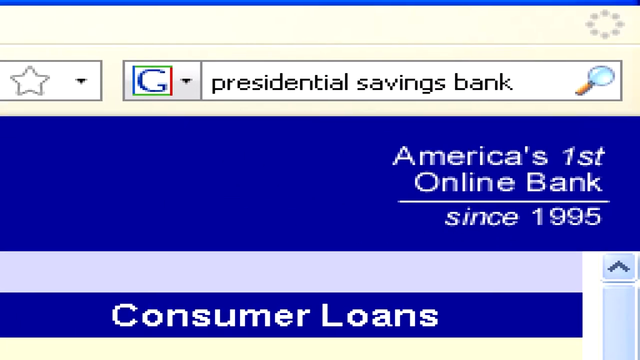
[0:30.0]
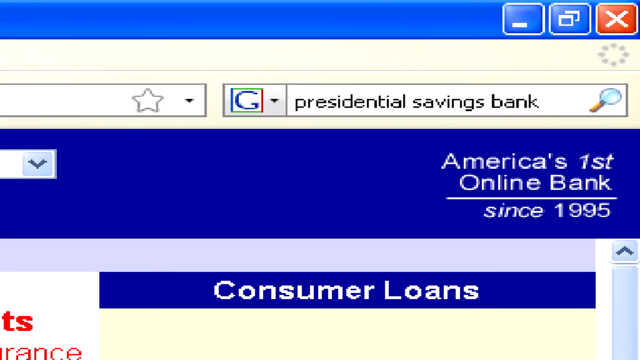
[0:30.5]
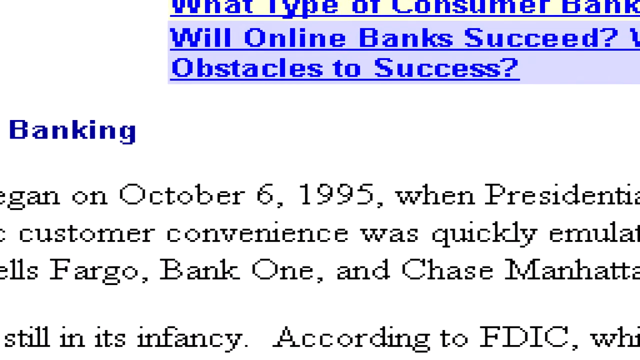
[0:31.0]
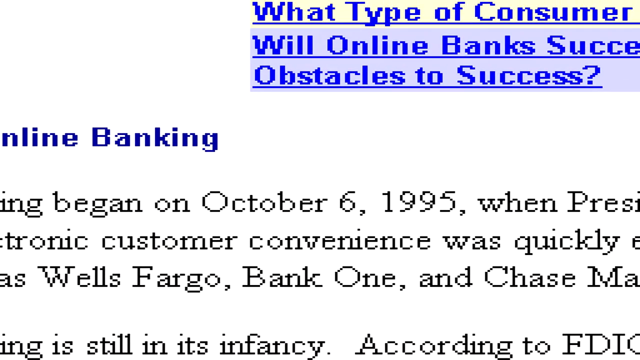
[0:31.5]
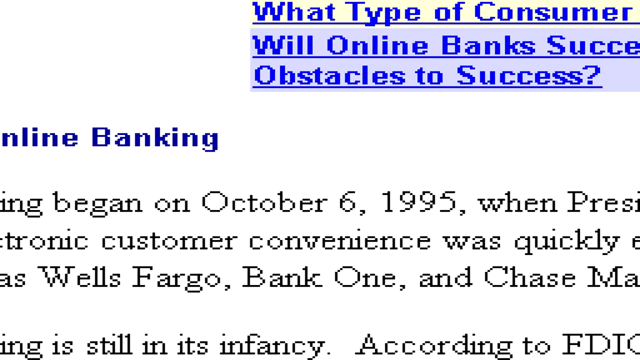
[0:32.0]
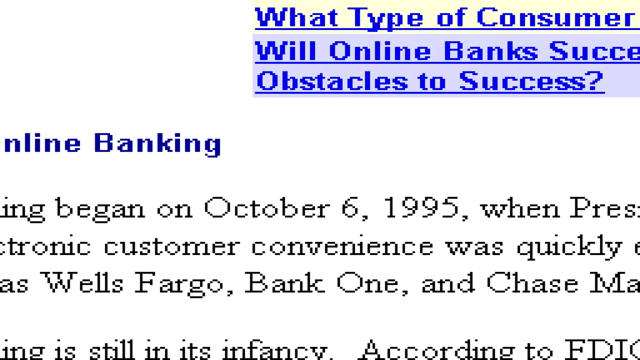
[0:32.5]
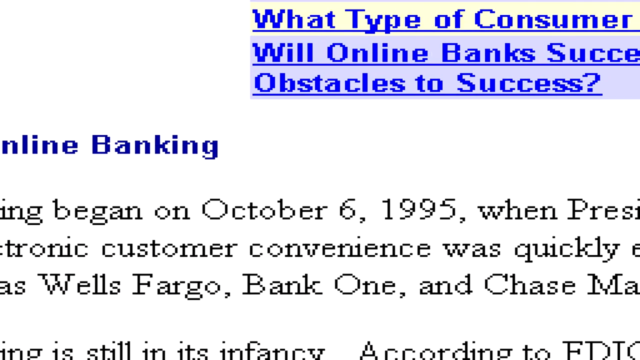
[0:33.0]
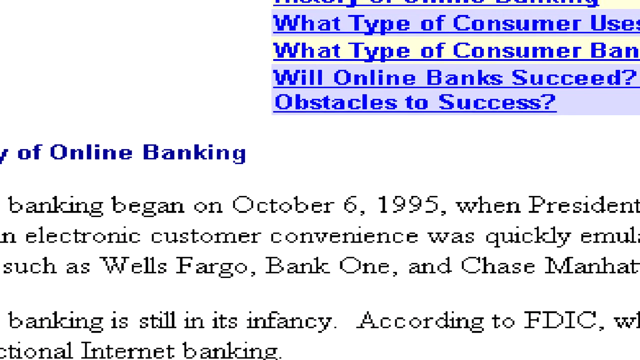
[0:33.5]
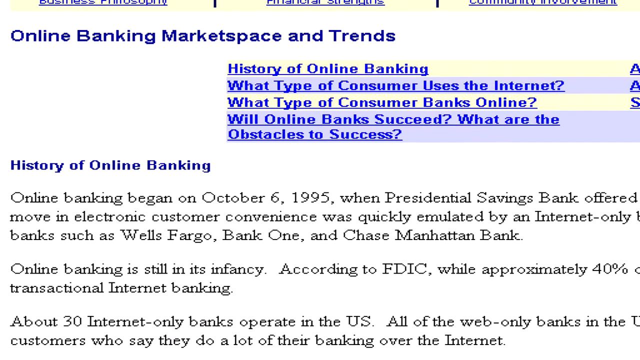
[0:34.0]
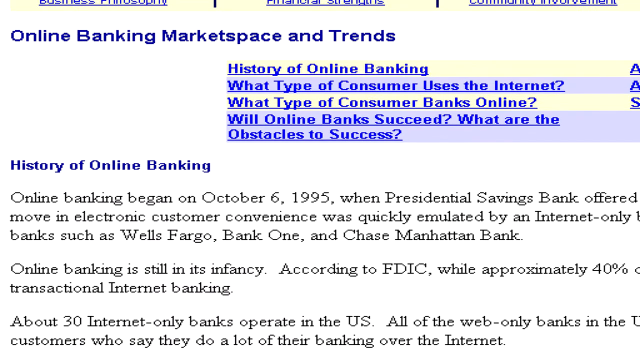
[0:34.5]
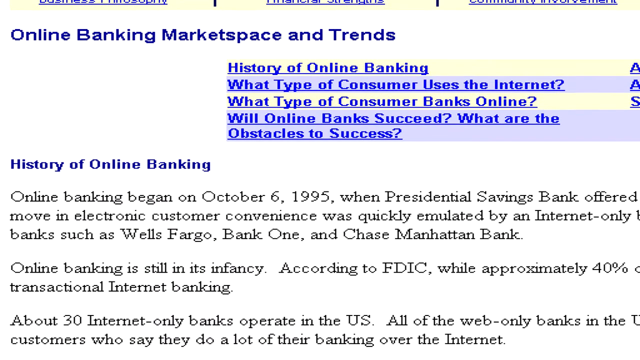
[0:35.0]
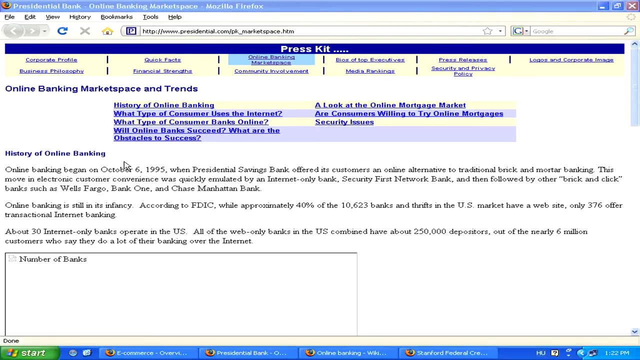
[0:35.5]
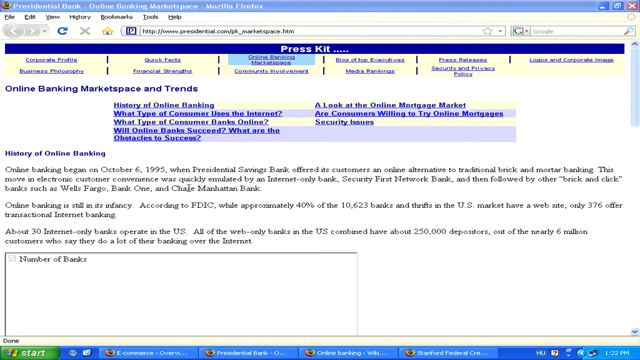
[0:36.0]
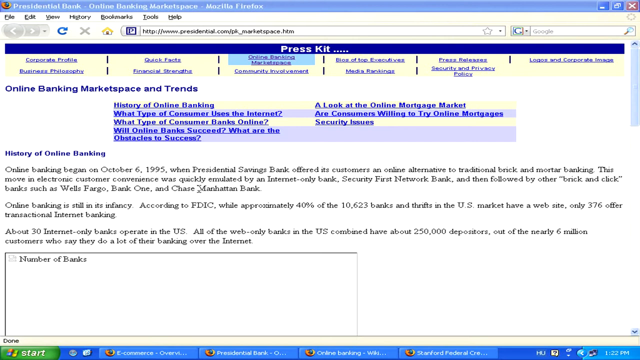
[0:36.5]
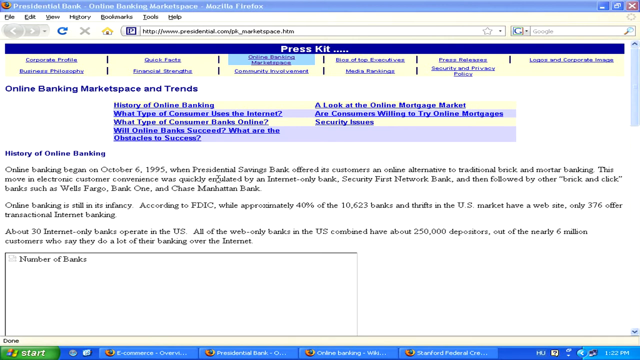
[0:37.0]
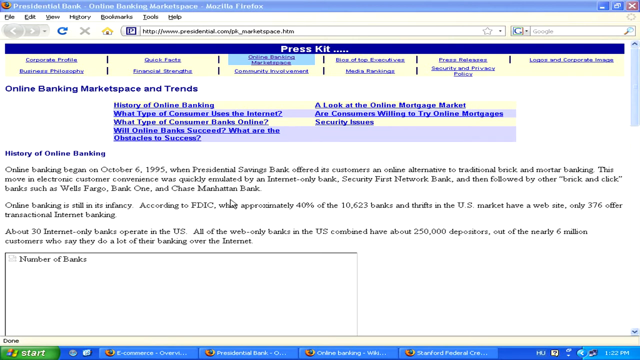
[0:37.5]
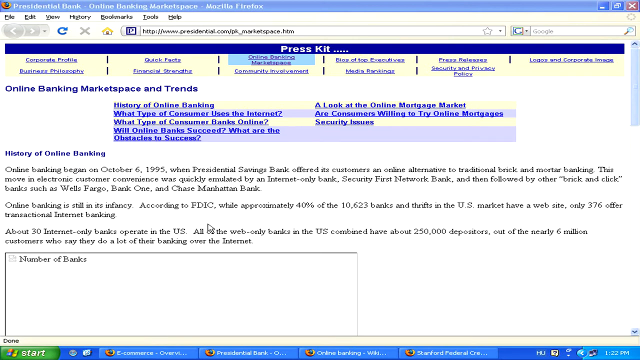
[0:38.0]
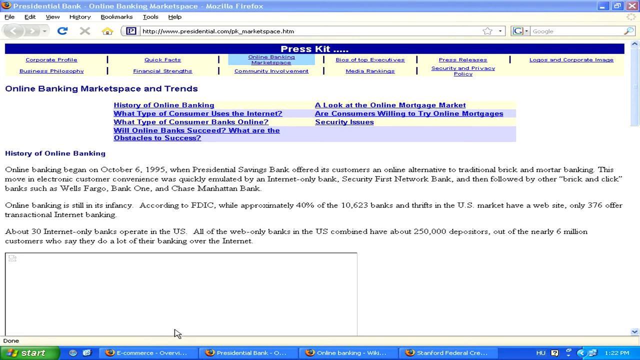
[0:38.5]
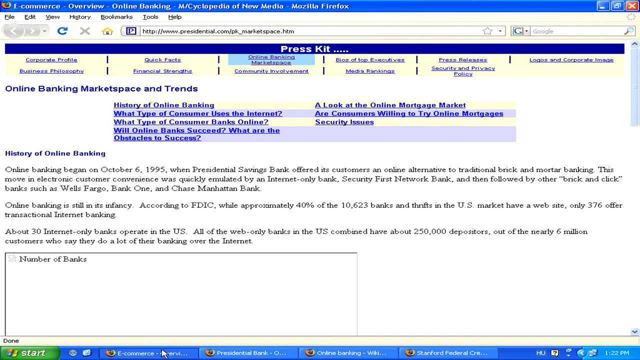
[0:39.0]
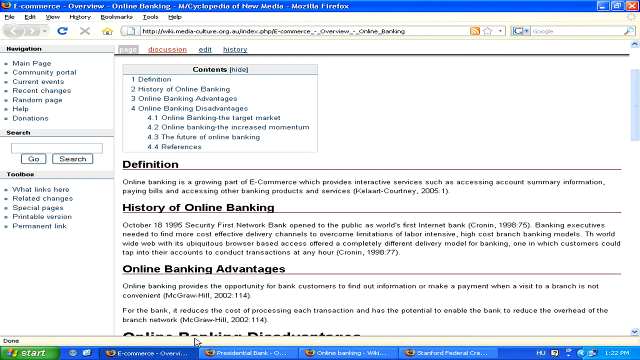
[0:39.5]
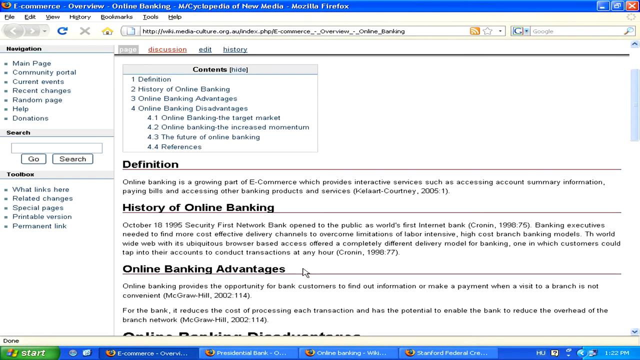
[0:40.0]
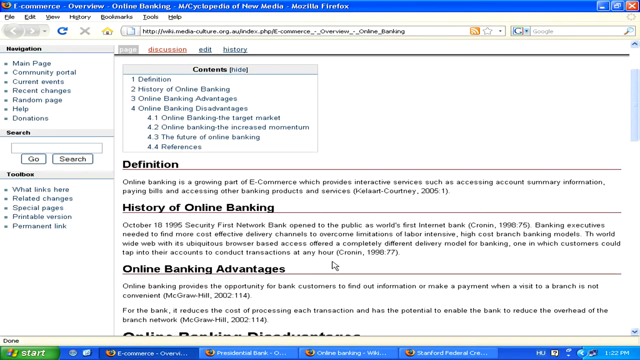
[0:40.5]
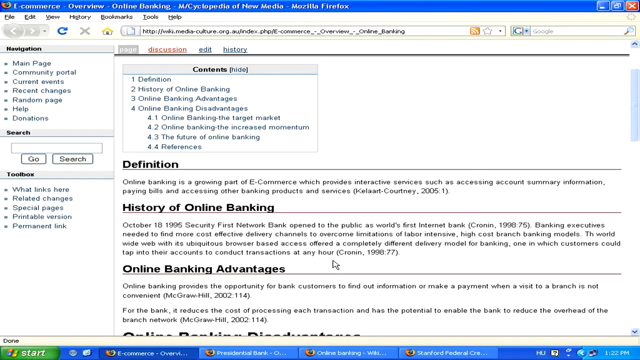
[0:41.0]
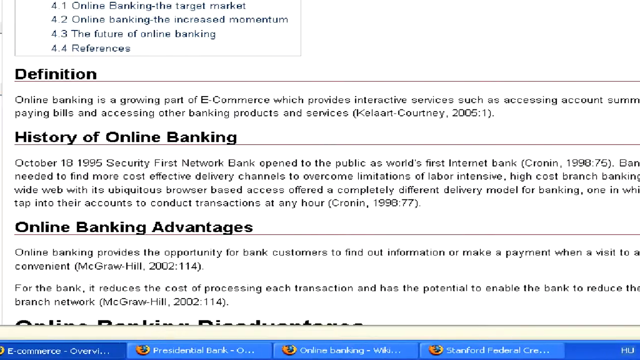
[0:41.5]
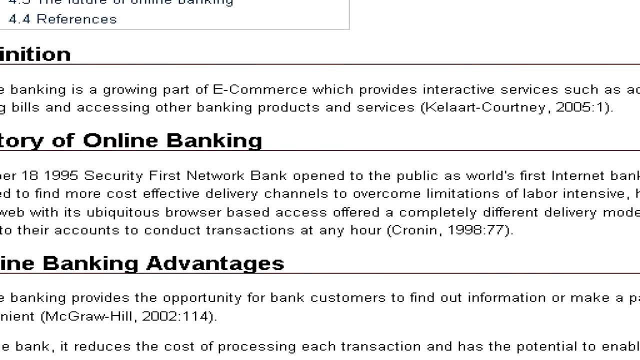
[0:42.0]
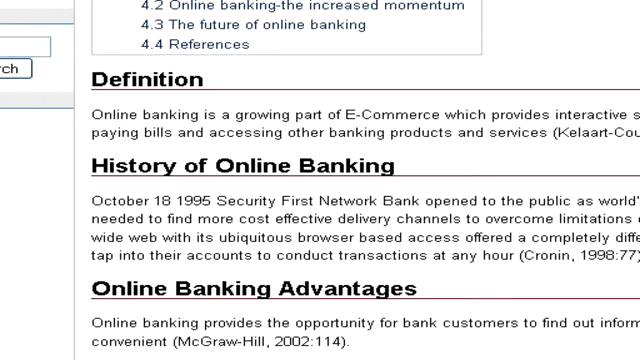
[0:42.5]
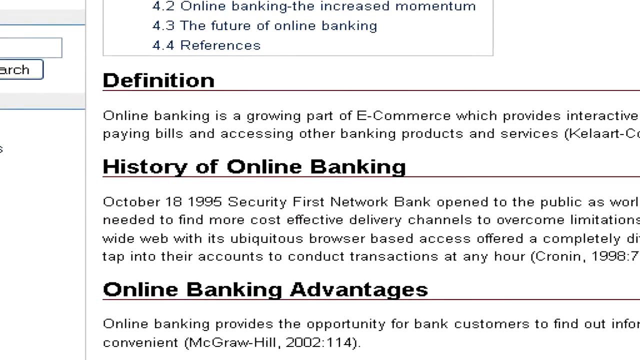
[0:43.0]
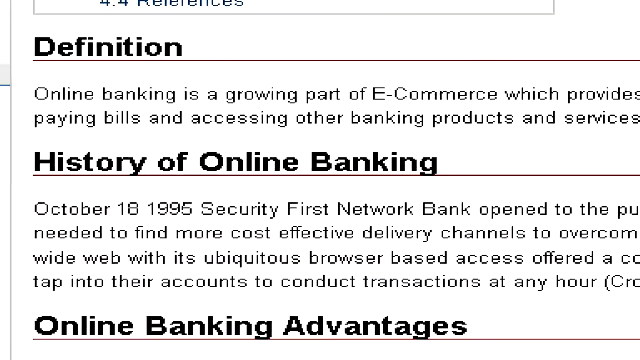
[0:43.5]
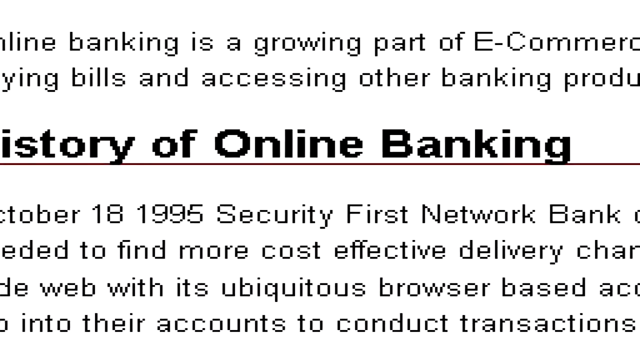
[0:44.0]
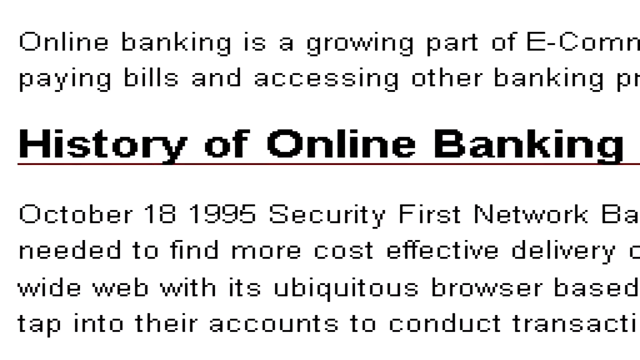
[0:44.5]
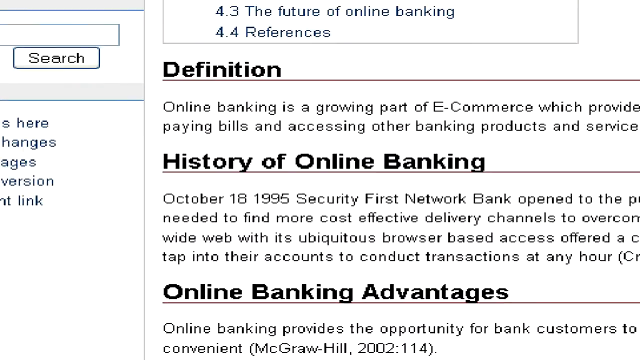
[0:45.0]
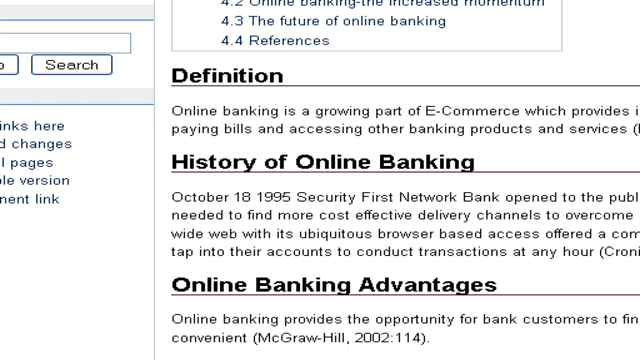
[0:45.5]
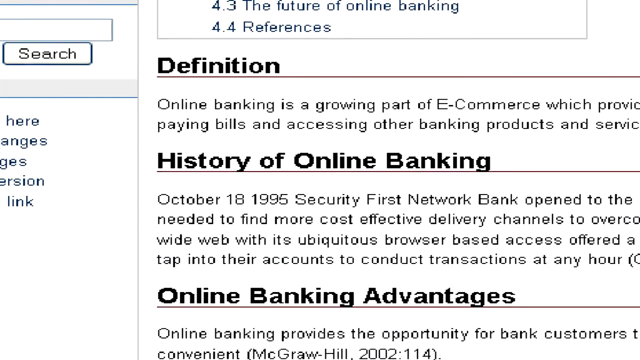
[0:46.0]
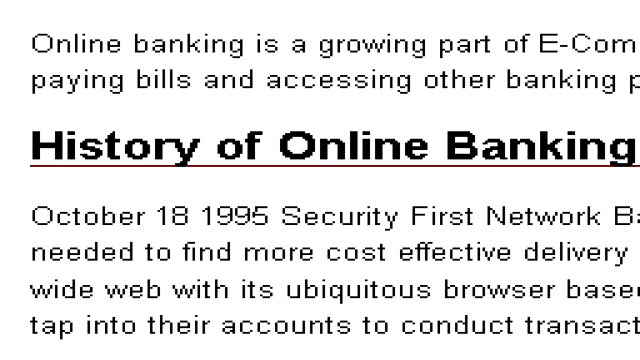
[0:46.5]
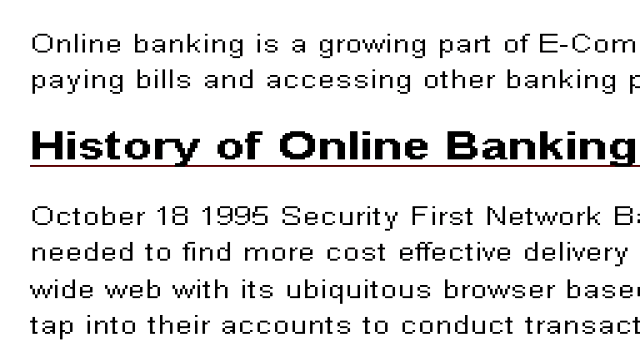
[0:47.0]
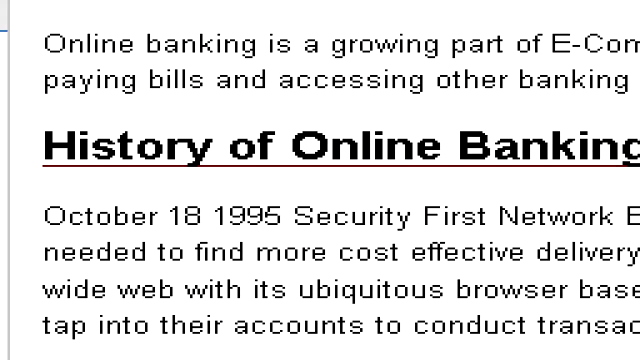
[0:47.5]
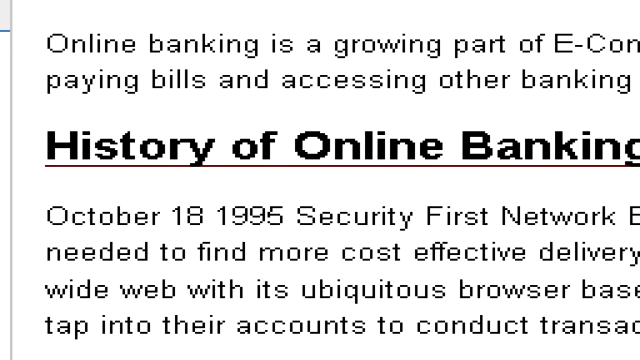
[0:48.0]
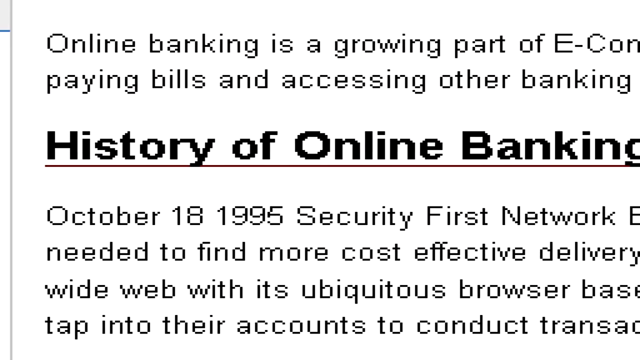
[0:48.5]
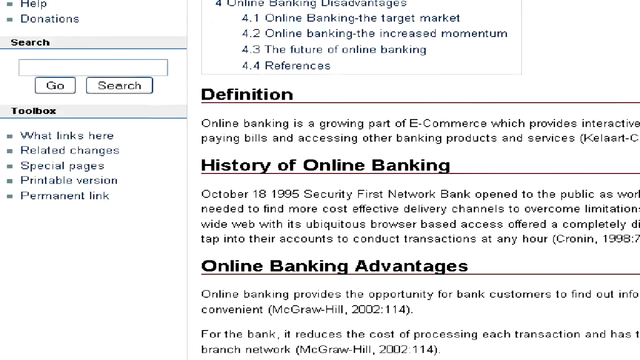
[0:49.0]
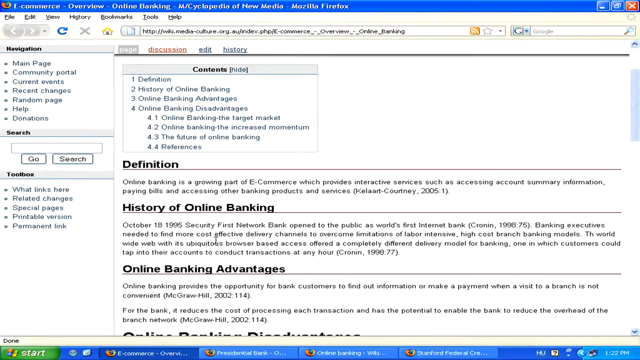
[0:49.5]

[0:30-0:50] The video returns to the website shown first. Links across the top read "history of online banking, what type of consumer uses the internet, what type of consumer banks online, will online banks succeed, what are the obstacles to success, a look at the online mortgage market, are consumers willing to try online mortgages," and the last link is for security issues. A history of online banking section states that online banking began on October 6, 1995, with Presidential Savings Bank. The video then moves to another page about online banking, with a definition, the history of online banking, and online banking advantages.